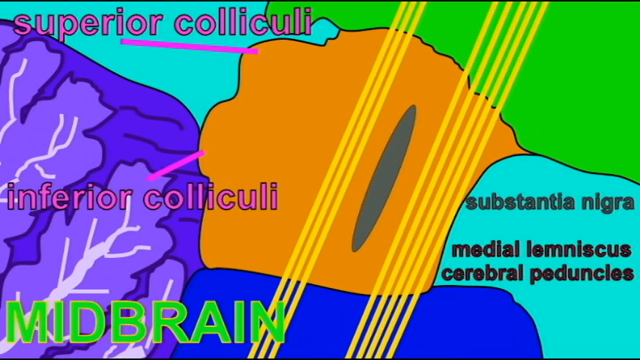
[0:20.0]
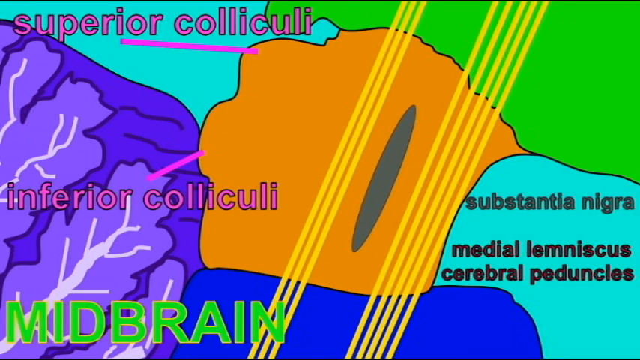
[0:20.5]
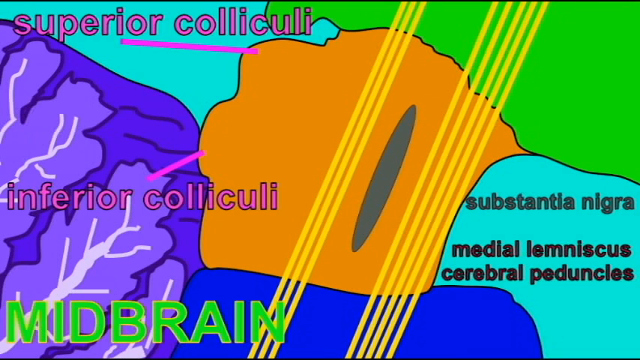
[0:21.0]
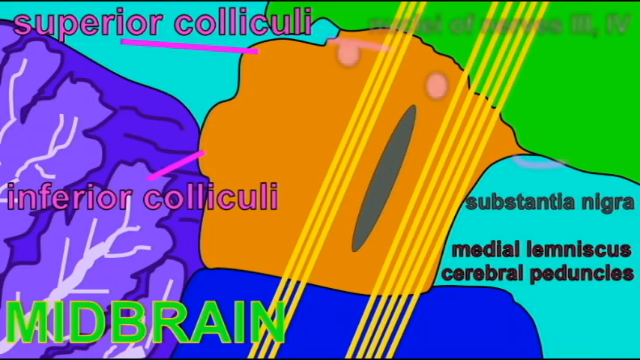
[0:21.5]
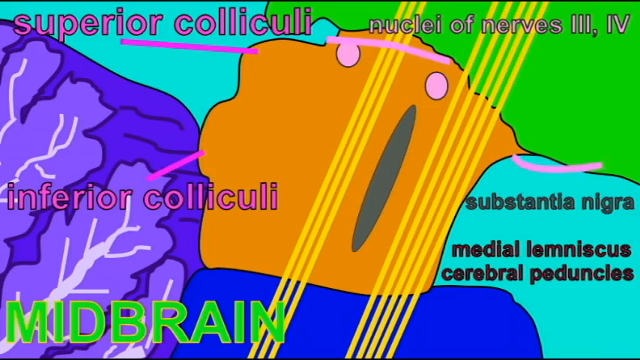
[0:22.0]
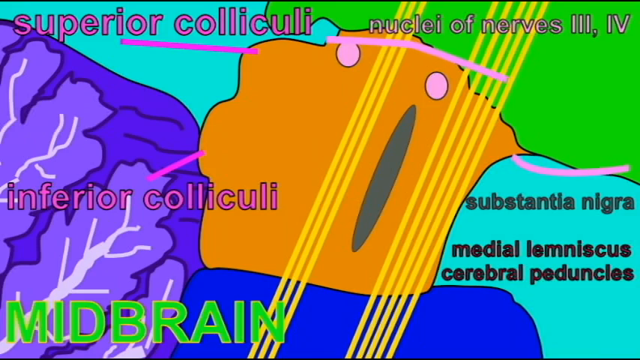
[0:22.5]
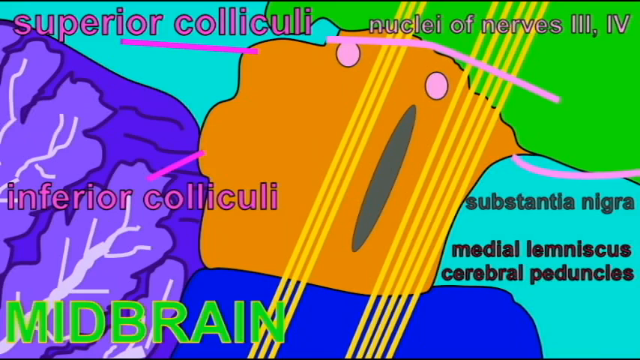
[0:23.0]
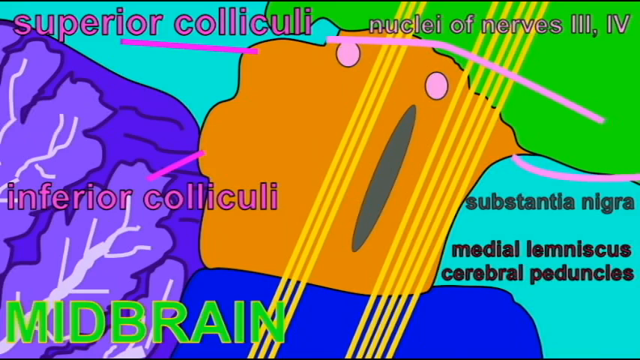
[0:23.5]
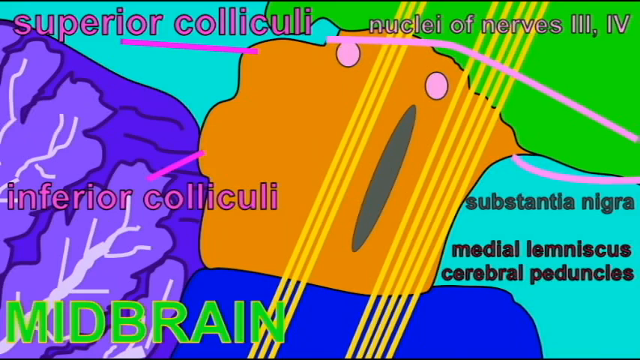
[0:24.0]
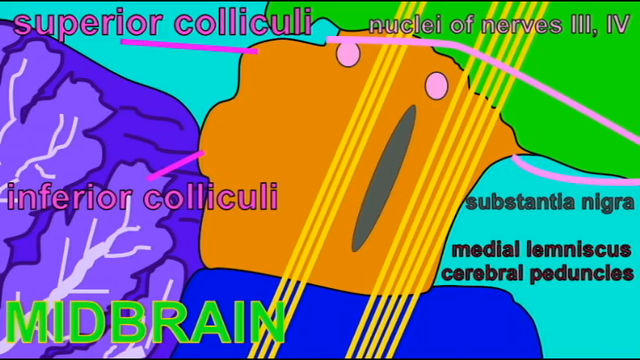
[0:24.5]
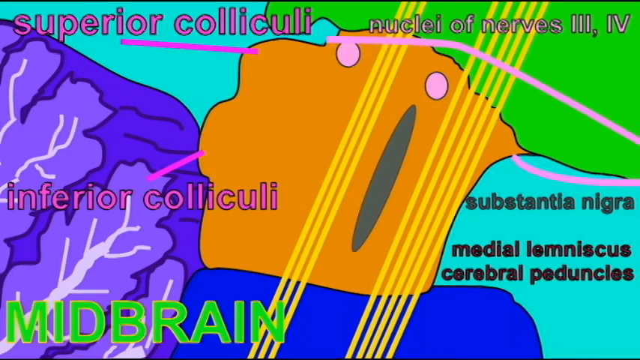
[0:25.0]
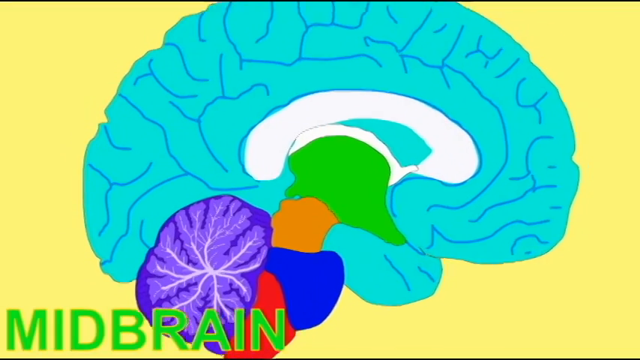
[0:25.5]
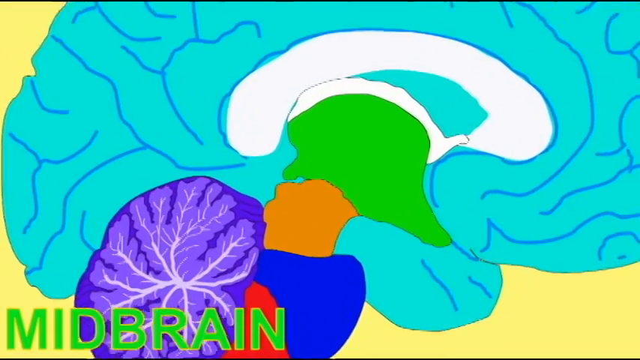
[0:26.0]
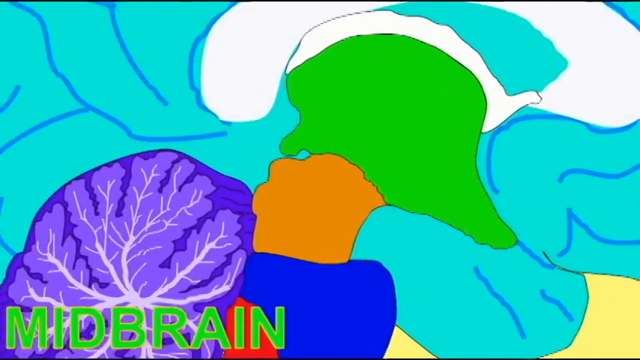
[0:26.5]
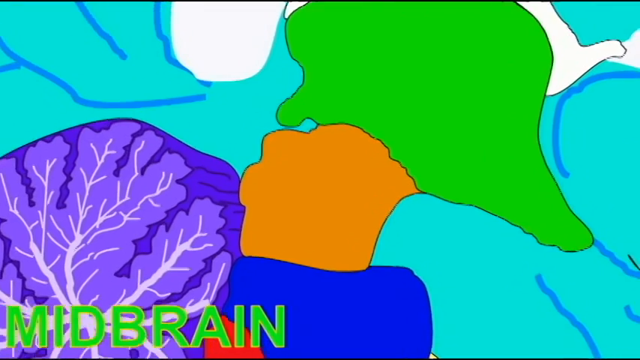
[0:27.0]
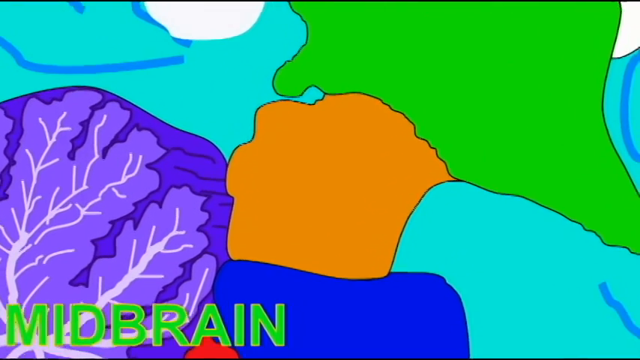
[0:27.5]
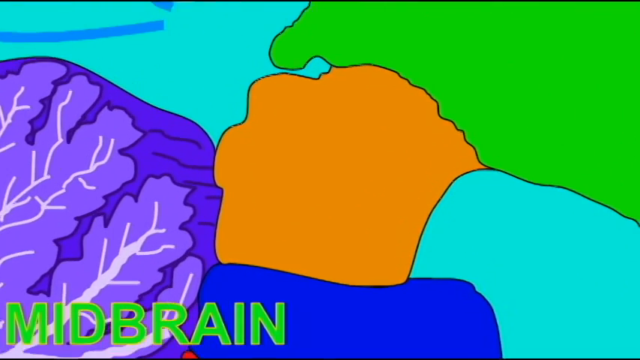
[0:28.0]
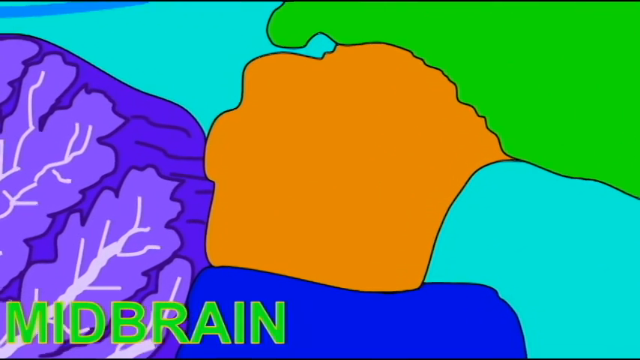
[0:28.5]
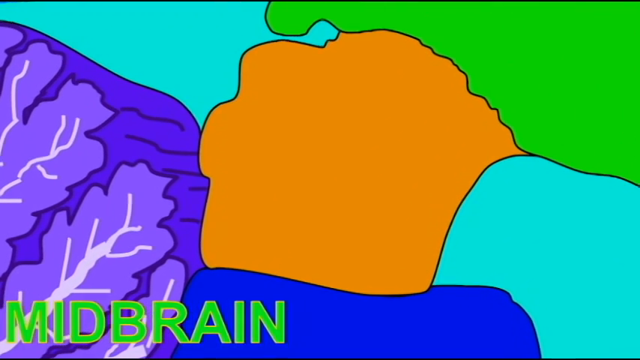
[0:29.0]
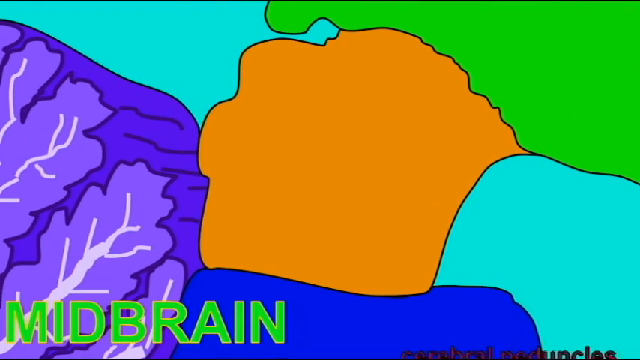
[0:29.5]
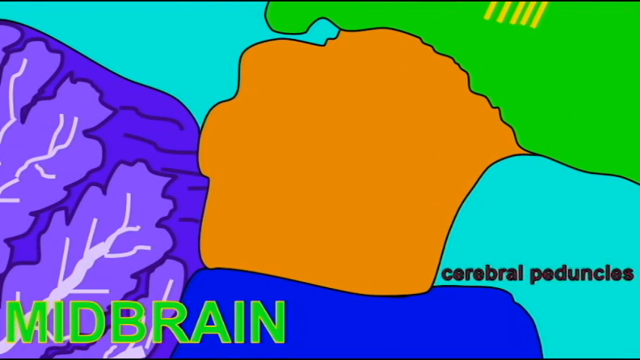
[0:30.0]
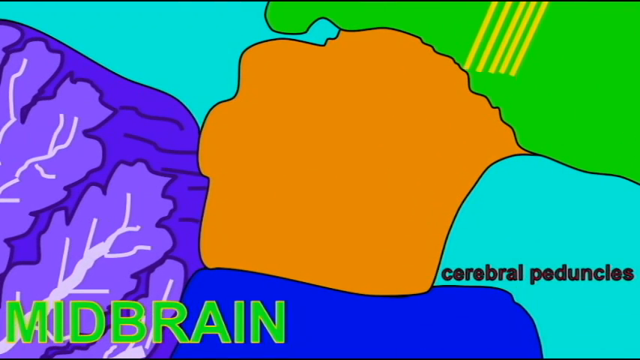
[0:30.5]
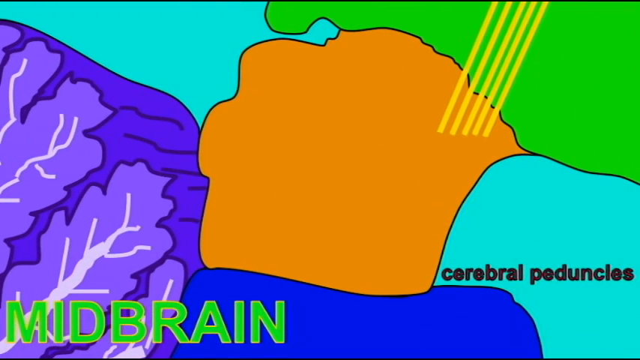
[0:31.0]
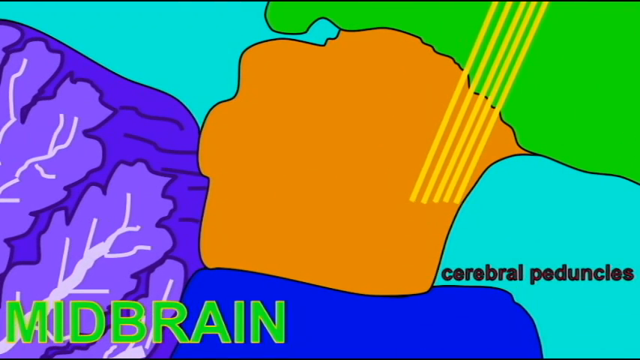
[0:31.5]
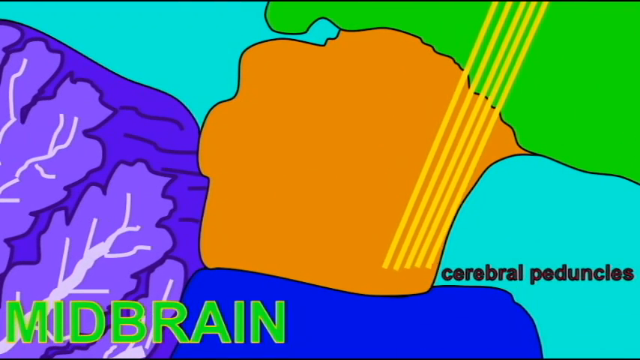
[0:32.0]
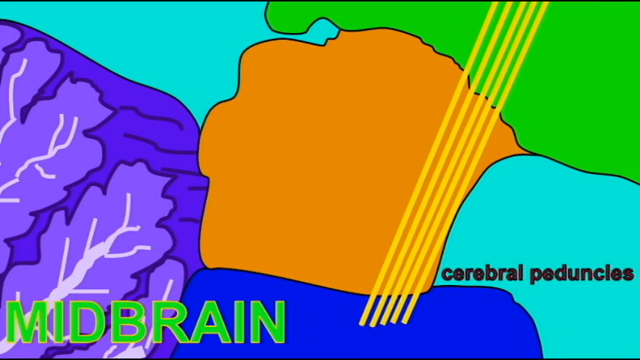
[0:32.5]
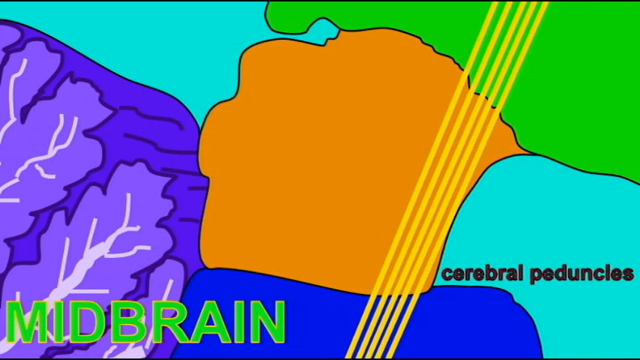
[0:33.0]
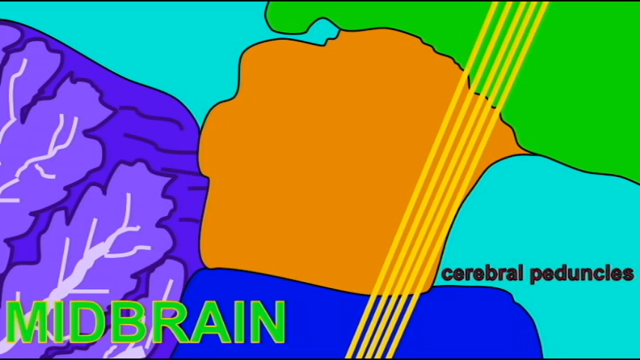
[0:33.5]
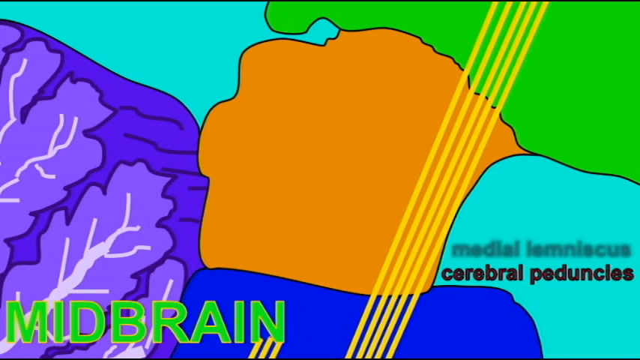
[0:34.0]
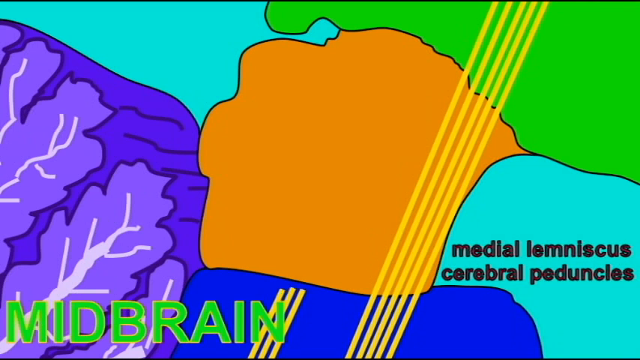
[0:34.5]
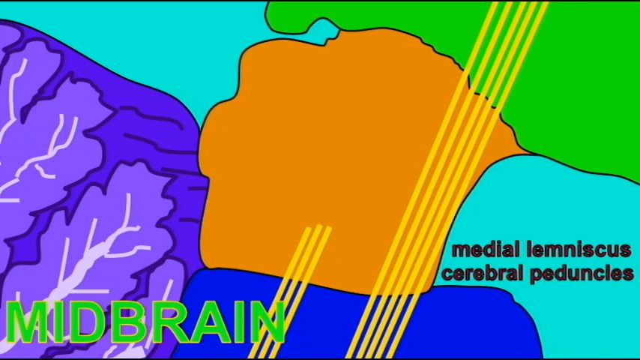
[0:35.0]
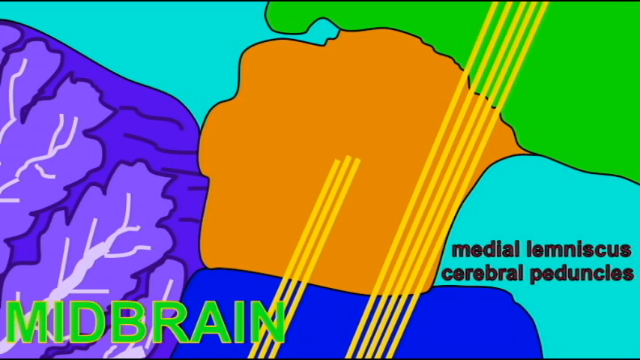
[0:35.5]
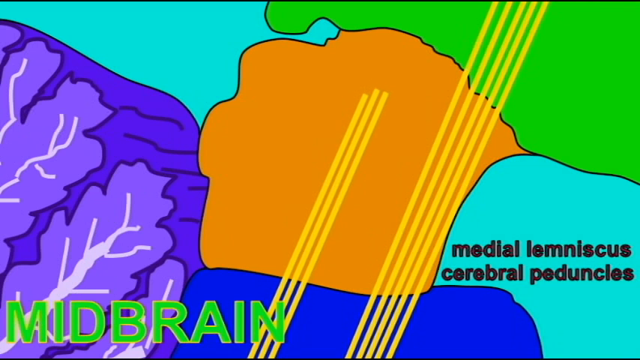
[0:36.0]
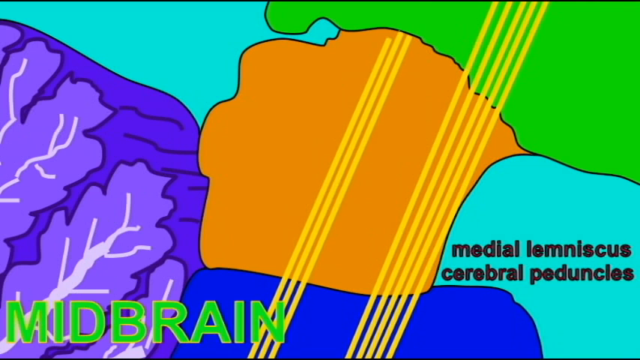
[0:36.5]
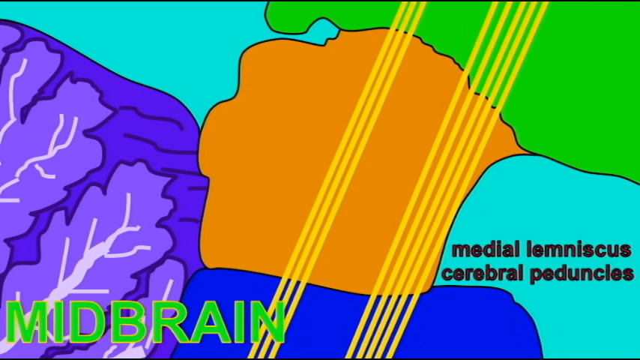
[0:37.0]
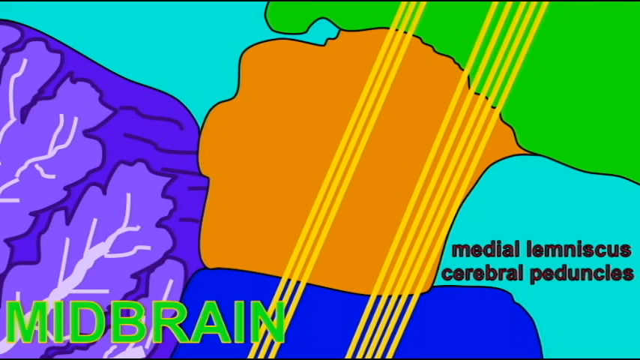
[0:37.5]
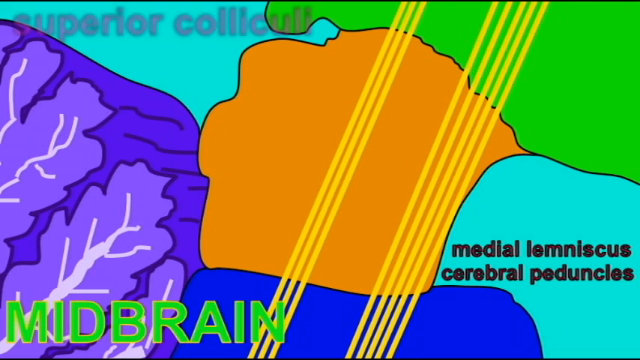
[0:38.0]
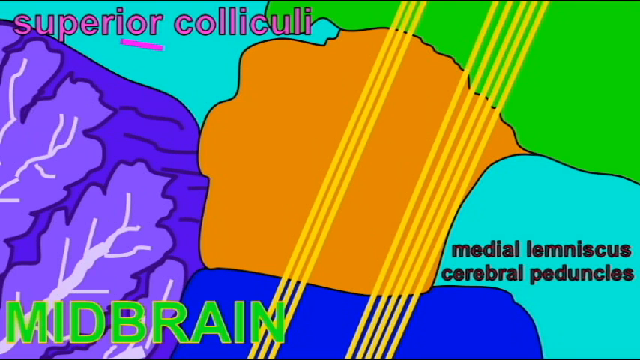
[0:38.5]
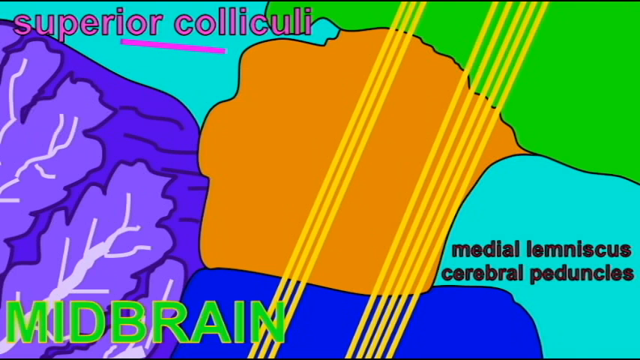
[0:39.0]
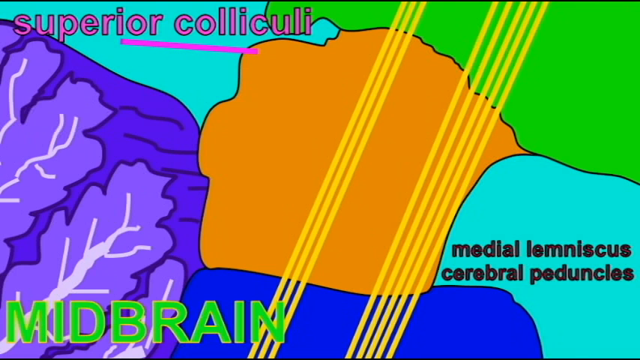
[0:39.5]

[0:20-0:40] A purple line runs from left to right along the top of the midbrain, appearing to come from the superior colliculi. A small circle painted purple then appears, with the words "nuclei of nerves three and four" on top of it. The scene then changes and shows this part of the brain again, painted orange, and the same sequence begins again: cerebral peduncles, then medical lemniscus, the three yellow lines going up, superior colliculi and inferior colliculi, substantia nigra, and nuclei of nerves. This time everything is shown at once rather than one thing at a time.